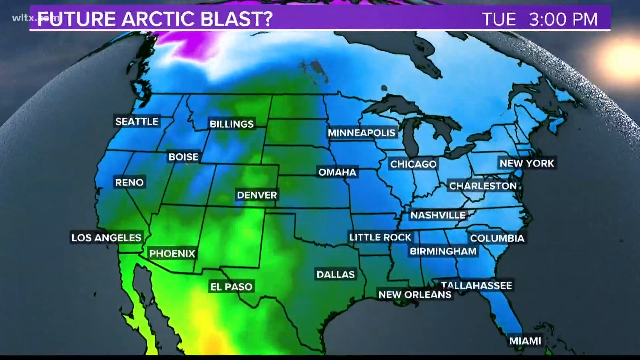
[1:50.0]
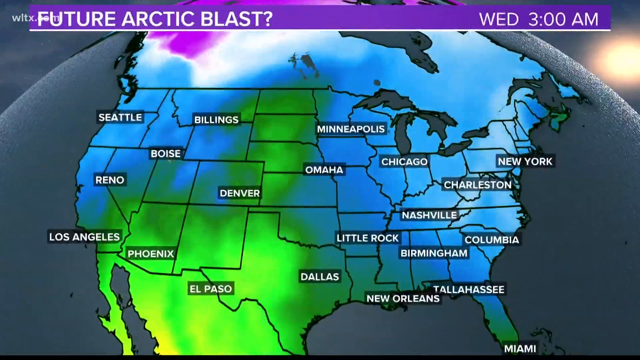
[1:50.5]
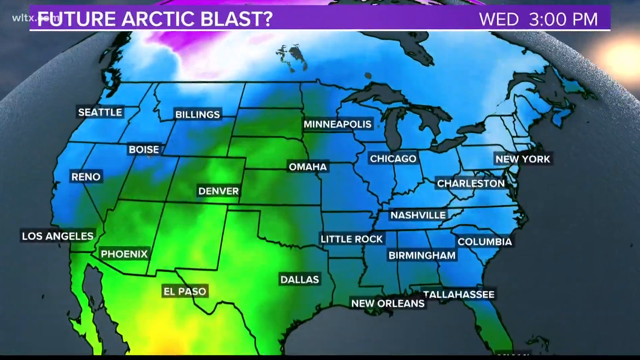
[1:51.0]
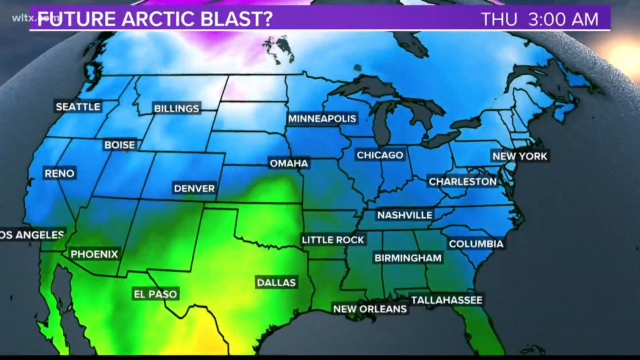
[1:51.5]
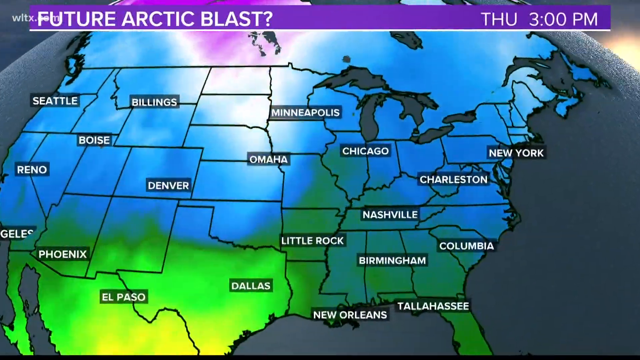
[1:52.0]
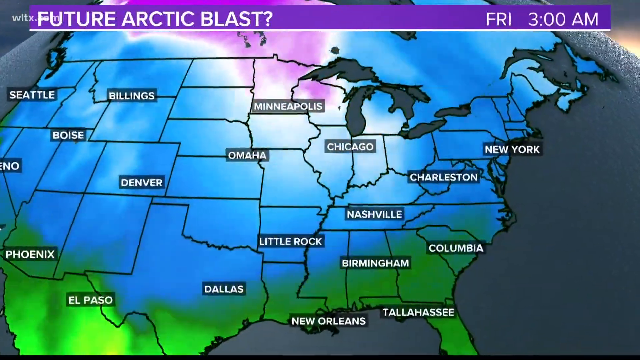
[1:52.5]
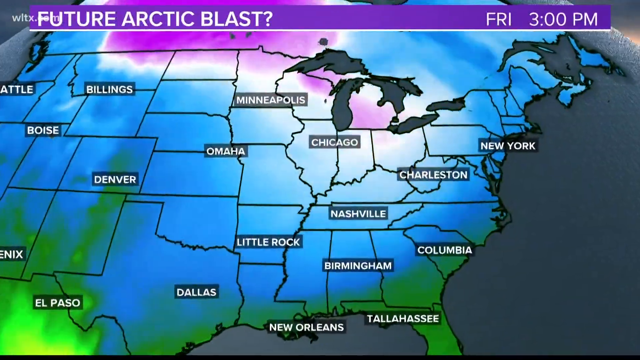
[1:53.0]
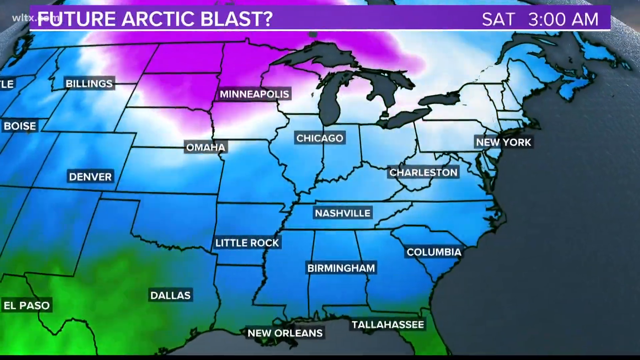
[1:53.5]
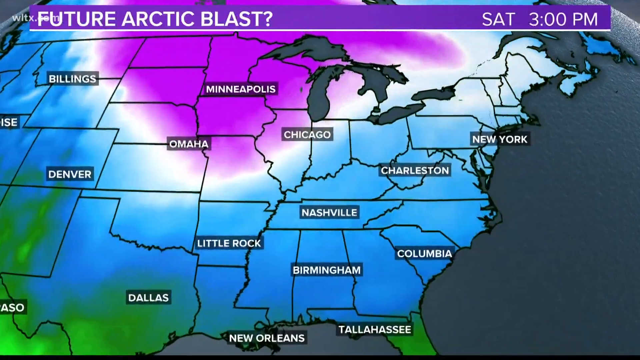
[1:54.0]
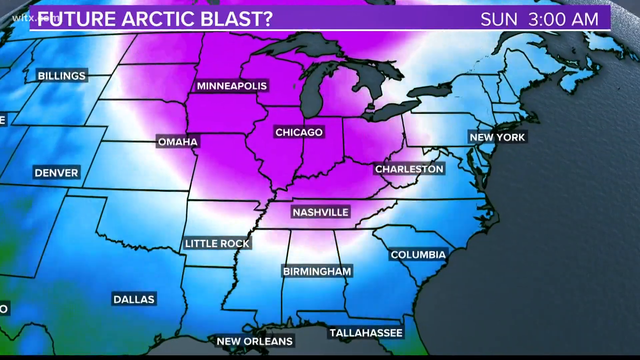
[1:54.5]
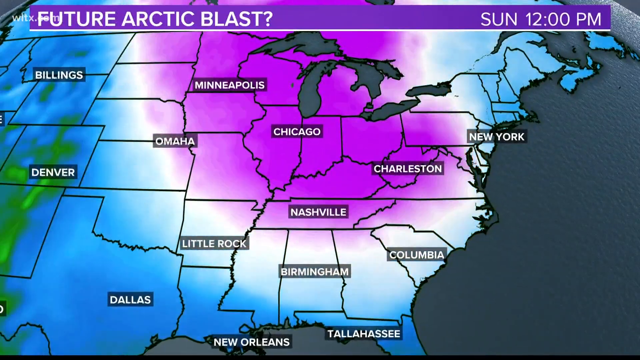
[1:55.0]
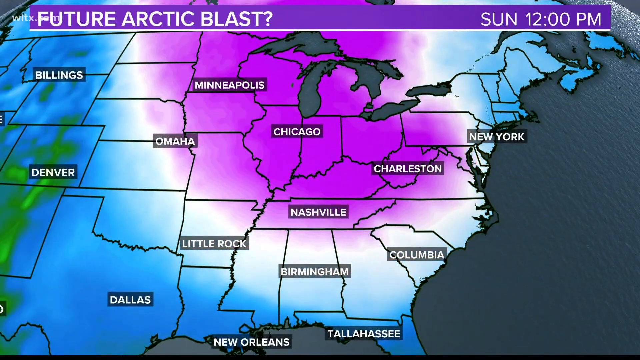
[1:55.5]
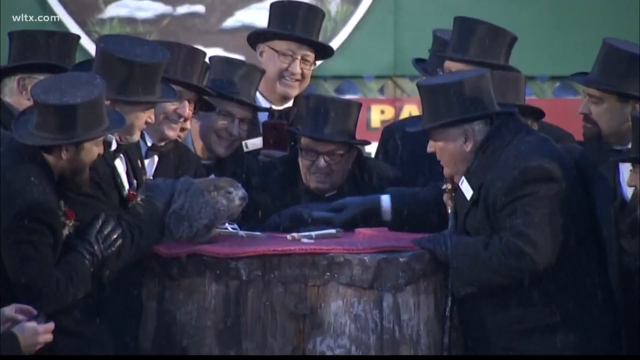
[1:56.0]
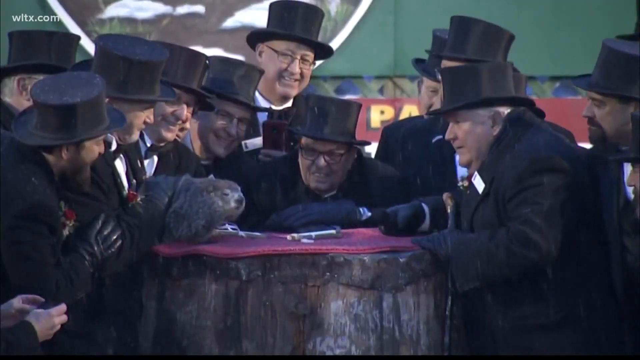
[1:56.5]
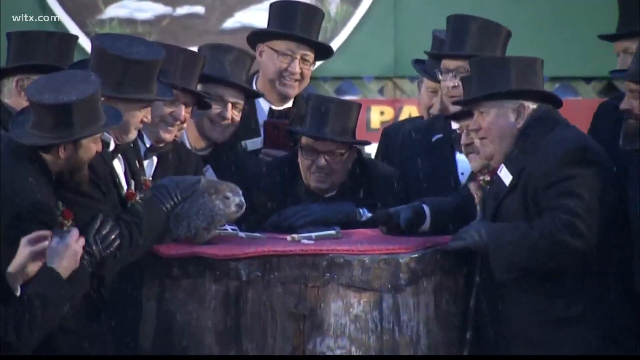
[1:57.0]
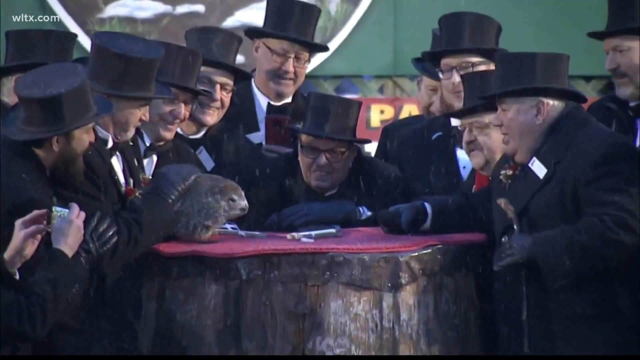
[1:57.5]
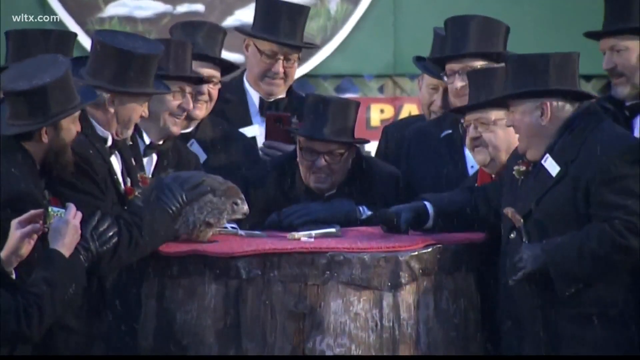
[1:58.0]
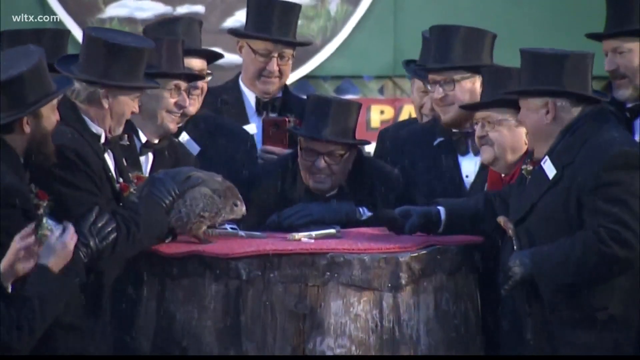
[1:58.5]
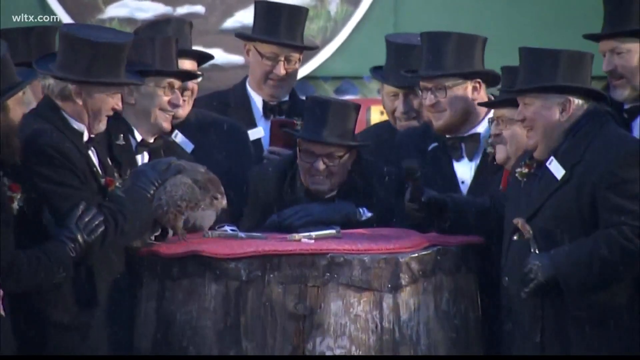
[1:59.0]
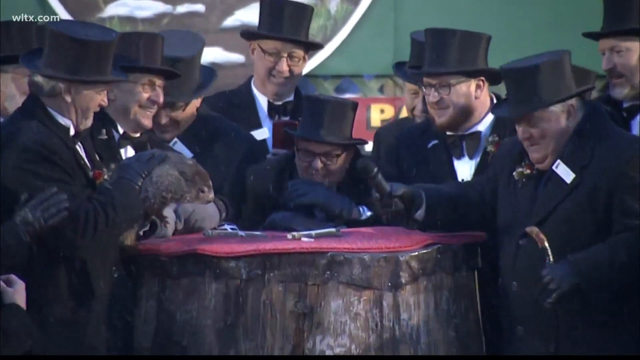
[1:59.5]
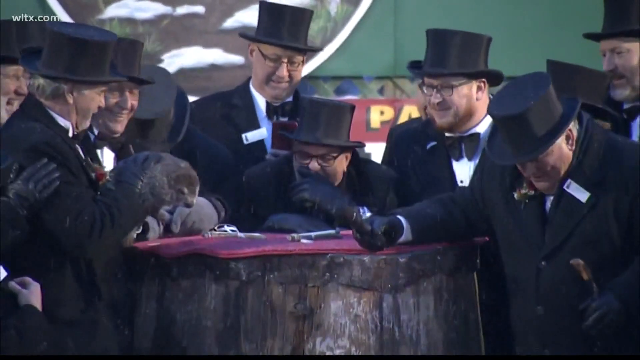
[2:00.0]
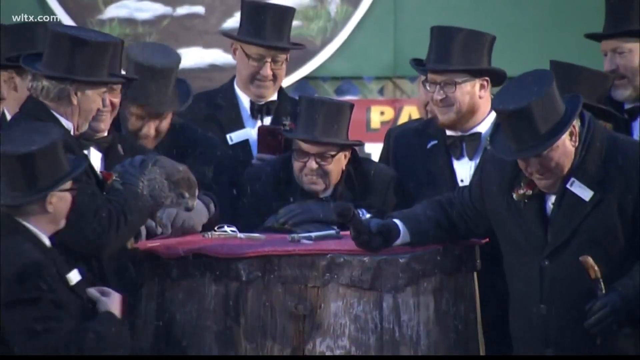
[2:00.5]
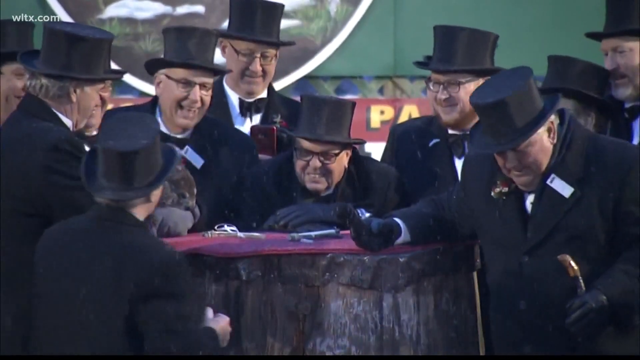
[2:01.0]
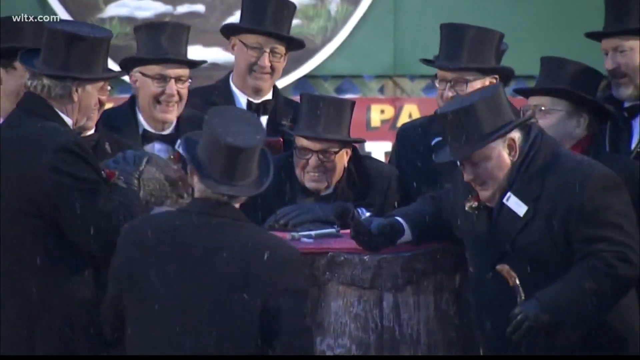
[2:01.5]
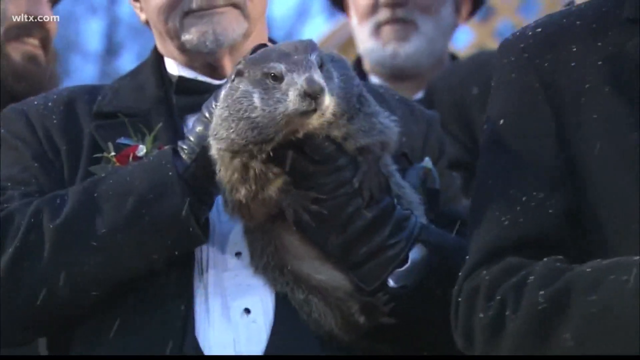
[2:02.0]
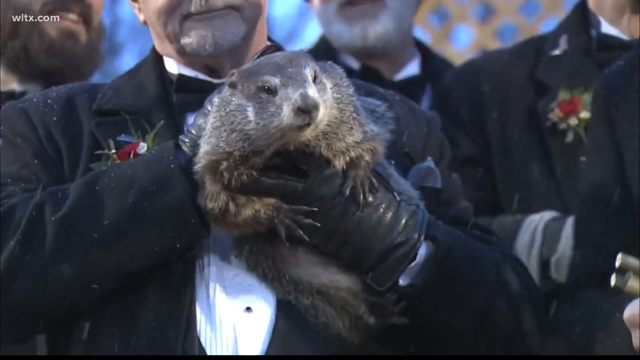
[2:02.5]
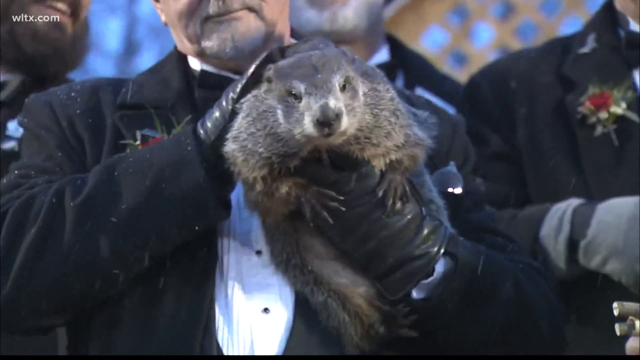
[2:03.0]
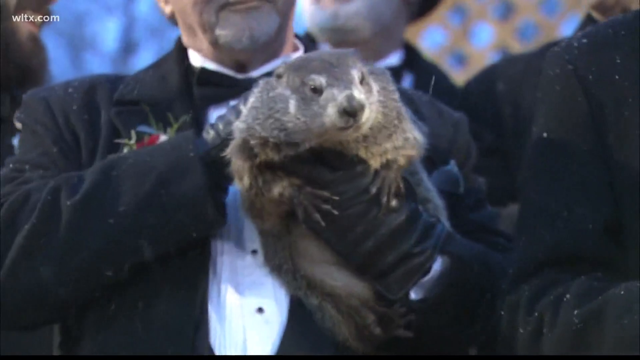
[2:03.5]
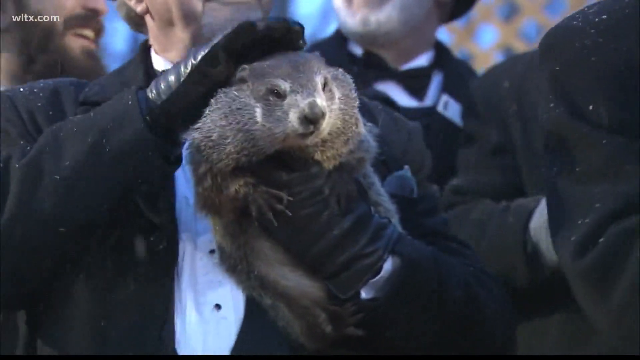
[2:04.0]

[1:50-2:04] A map labeled as a future Arctic blast shows the entire United States, with cities including New York, Chicago, Nashville, Little Rock, Dallas, New Orleans and Tallahassee. It runs as a time lapse from Tuesday through Saturday showing the weather moving, and it looks like it stops at Sunday. Then video of Phil appears: he is surrounded by gentlemen in black suits and black top hats, and one gentleman holds him up and also pets him. Once they are done, it looks like they are putting him back.